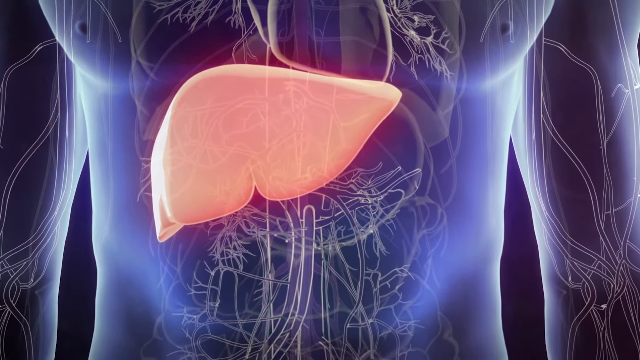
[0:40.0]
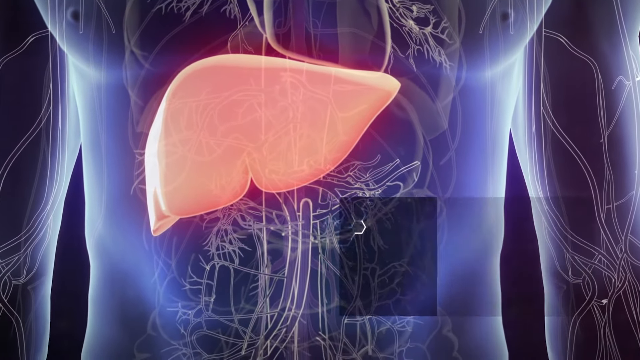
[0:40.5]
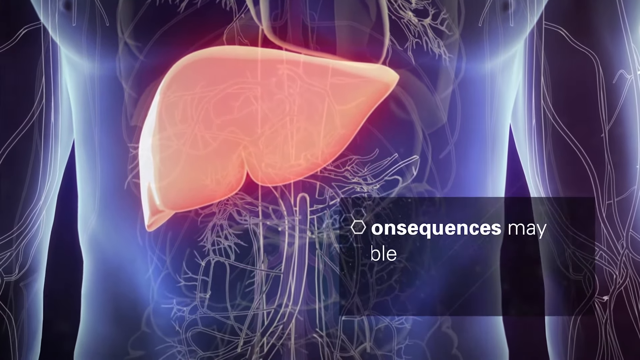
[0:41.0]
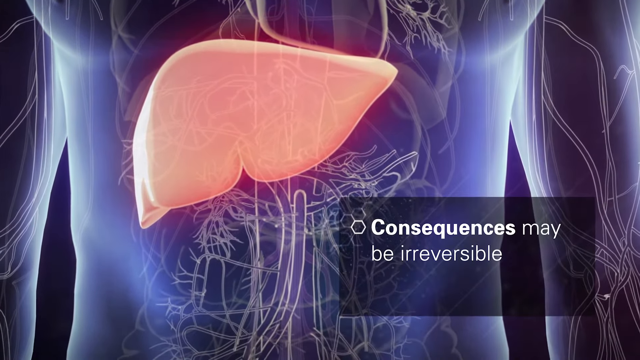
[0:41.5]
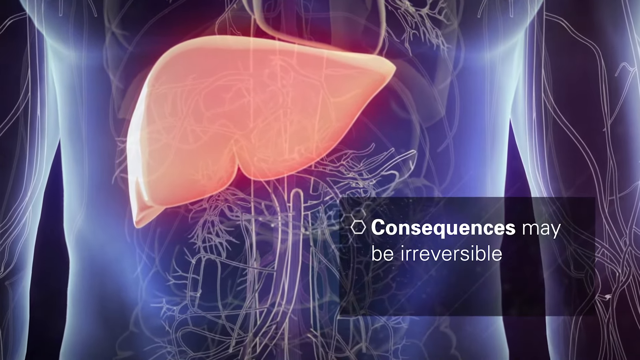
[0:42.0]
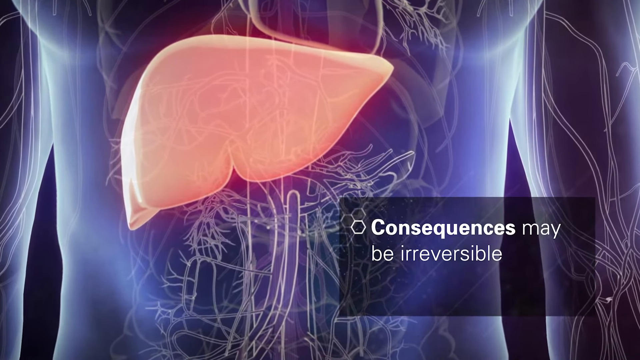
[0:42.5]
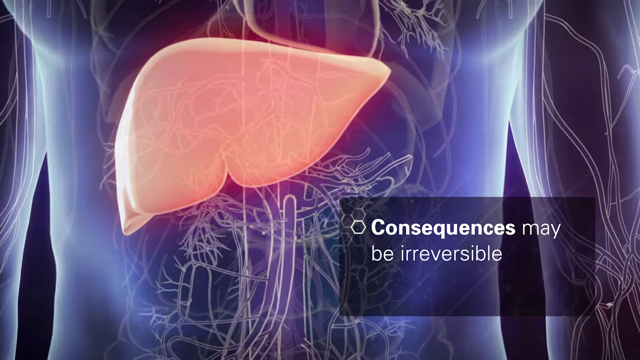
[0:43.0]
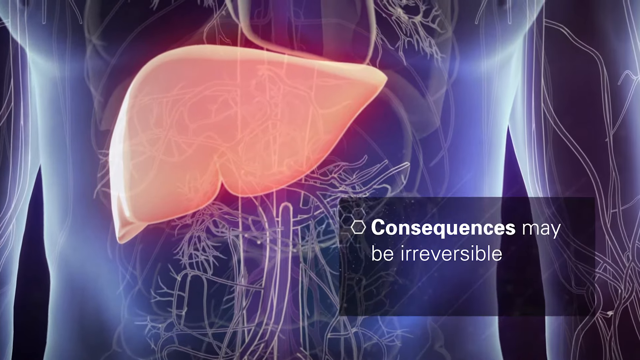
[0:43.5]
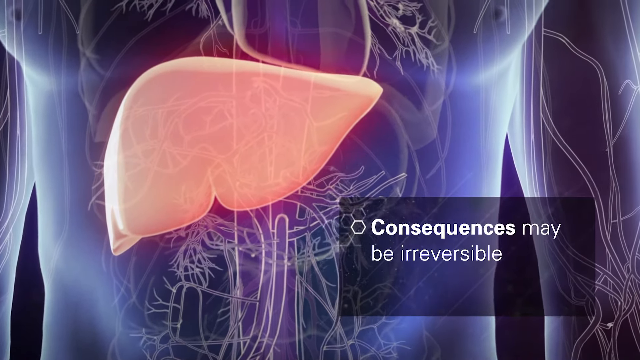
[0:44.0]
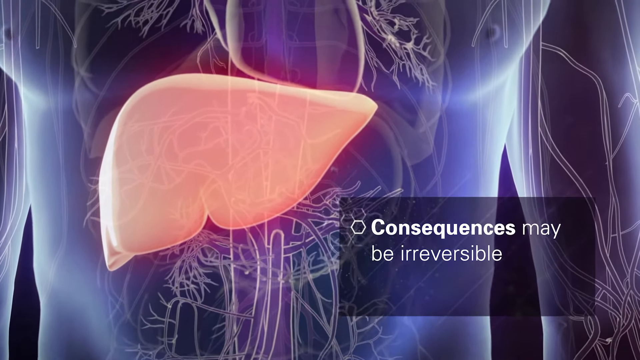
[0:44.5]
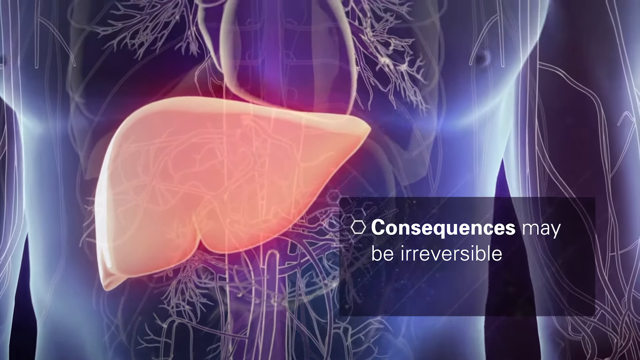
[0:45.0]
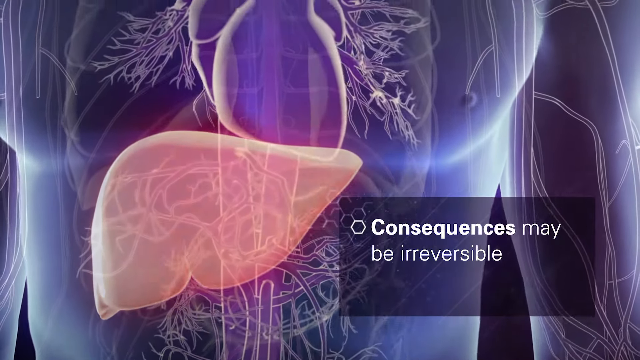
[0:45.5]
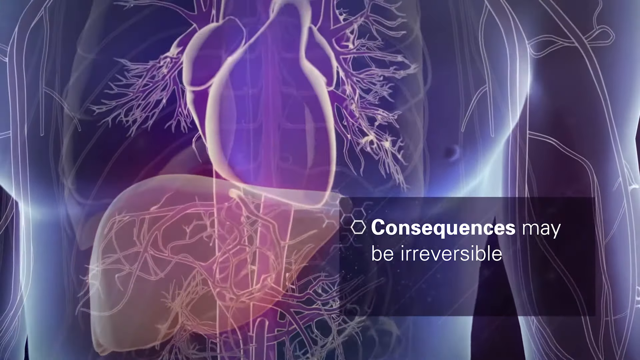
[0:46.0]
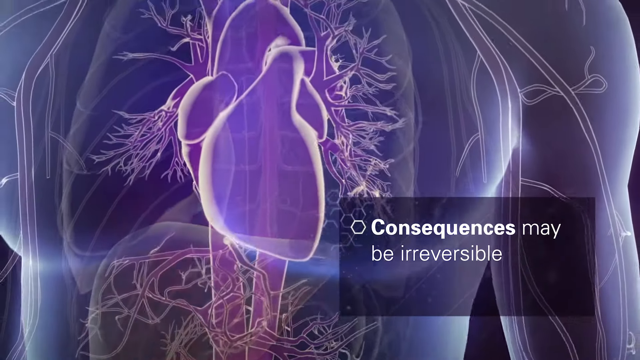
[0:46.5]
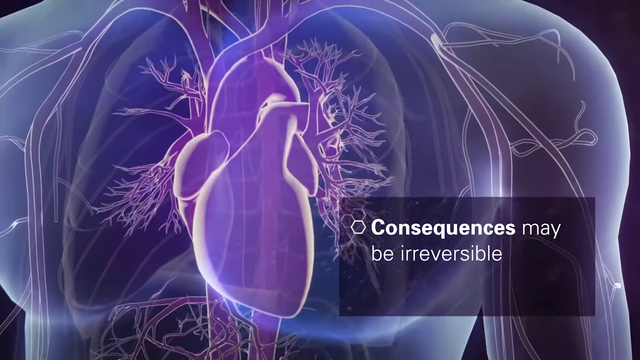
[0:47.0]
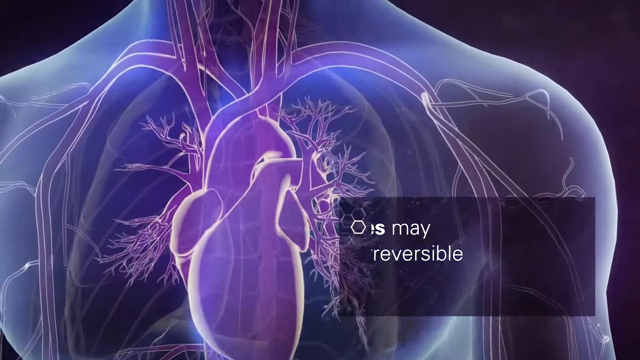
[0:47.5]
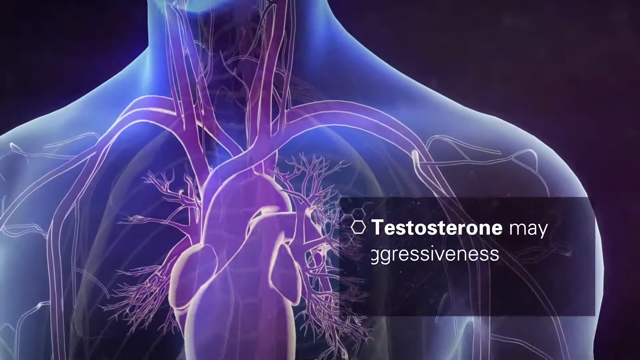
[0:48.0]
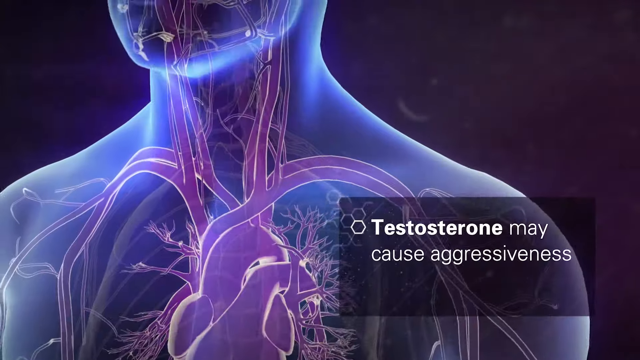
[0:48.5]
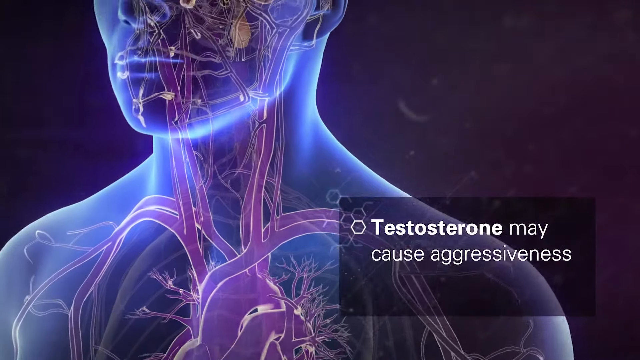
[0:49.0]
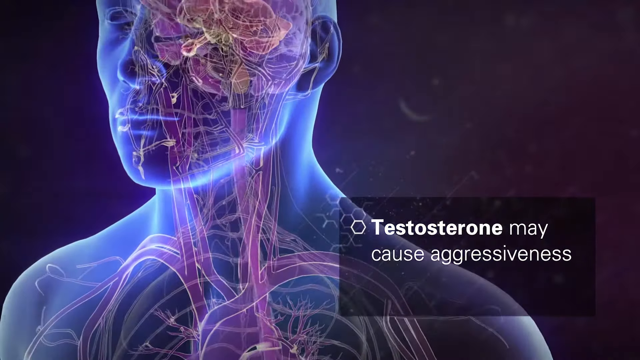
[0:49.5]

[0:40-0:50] The black background and the blue body figure appear again, with the focus on the midsection. The liver is enlarged for view, and on the lower right side a small box says "consequences may be irreversible." The view hones in on the liver, then zooms up toward the head and face, and the text says "testosterone may cause aggressiveness."